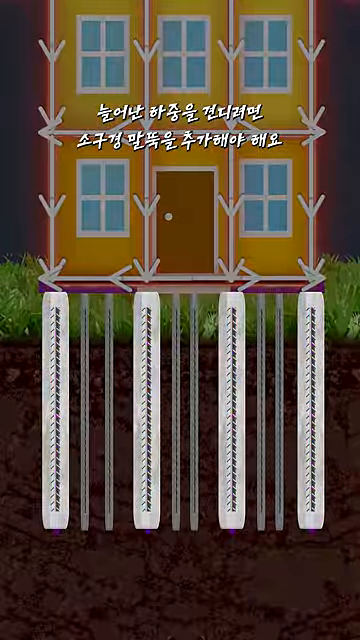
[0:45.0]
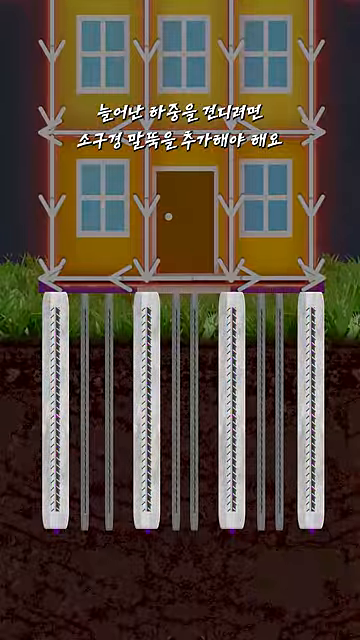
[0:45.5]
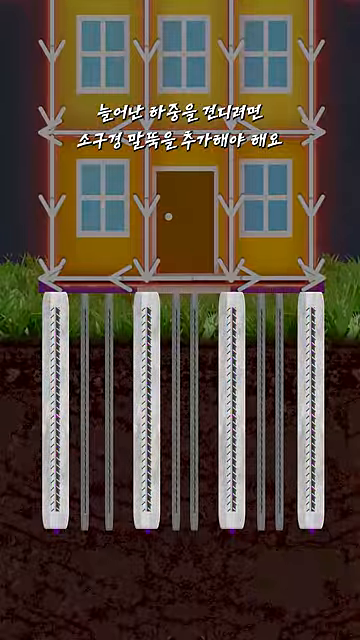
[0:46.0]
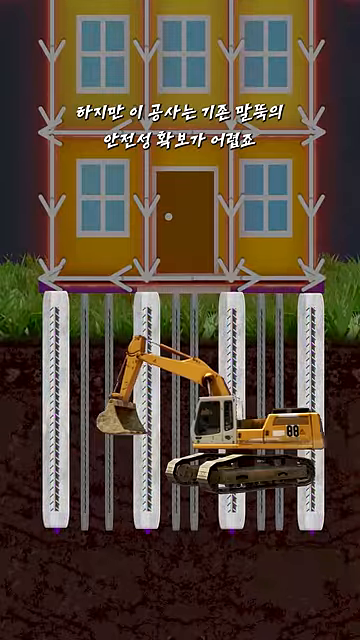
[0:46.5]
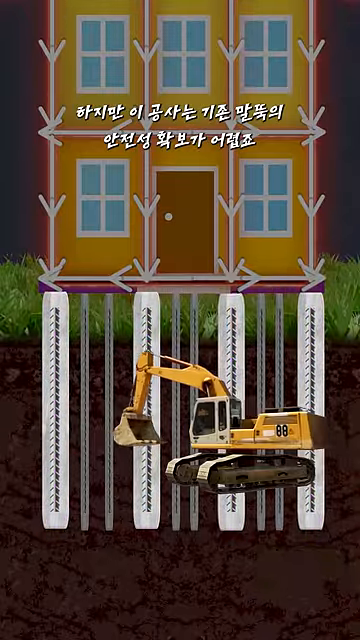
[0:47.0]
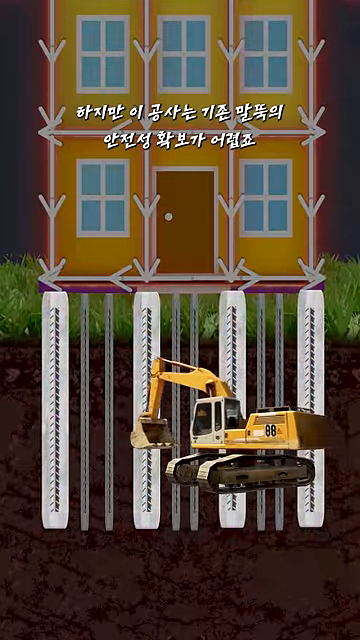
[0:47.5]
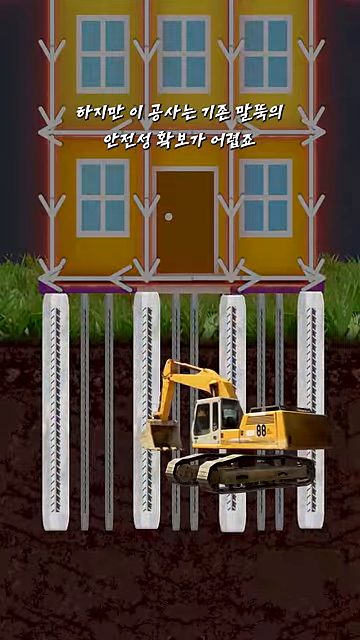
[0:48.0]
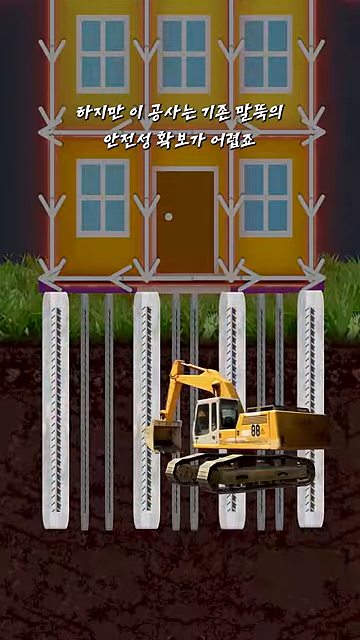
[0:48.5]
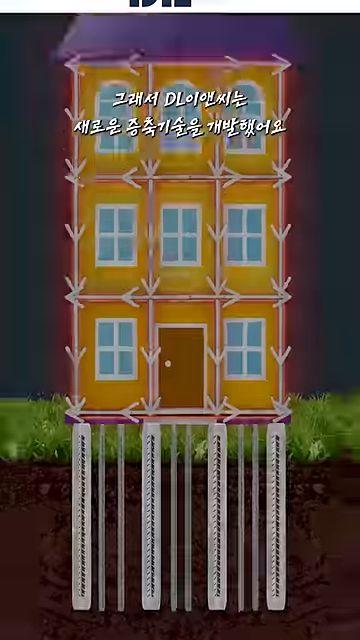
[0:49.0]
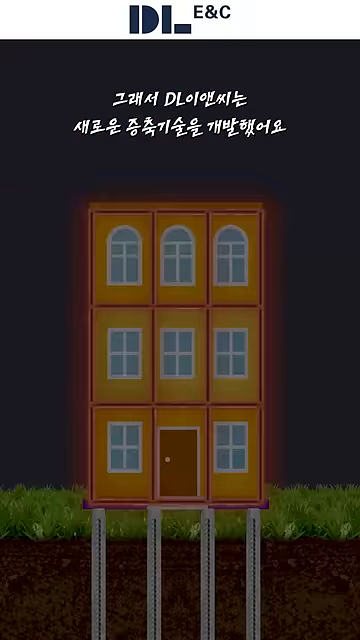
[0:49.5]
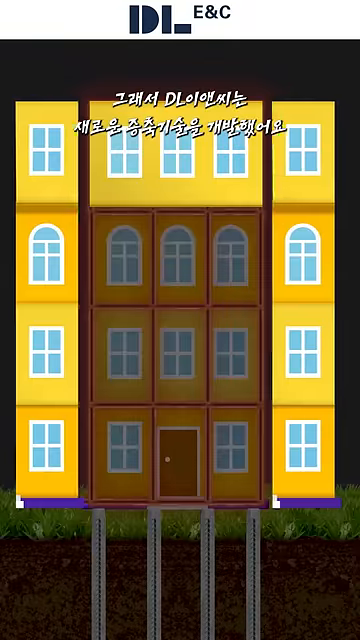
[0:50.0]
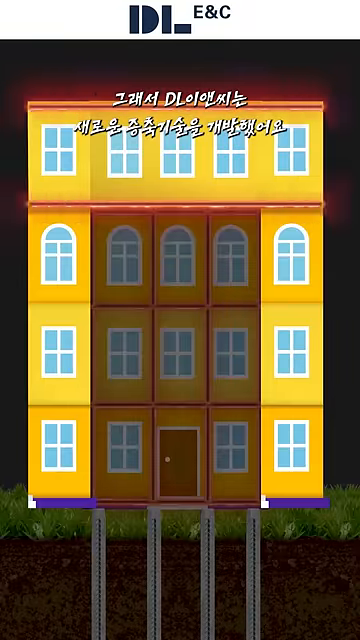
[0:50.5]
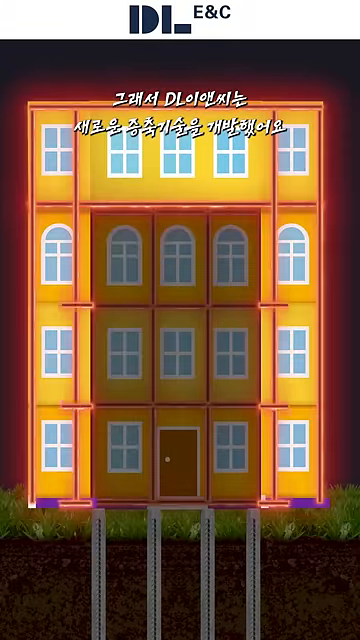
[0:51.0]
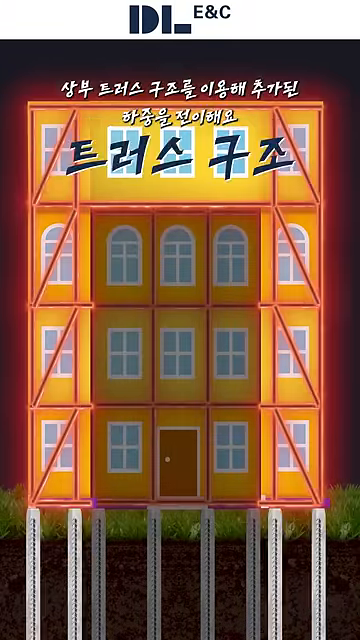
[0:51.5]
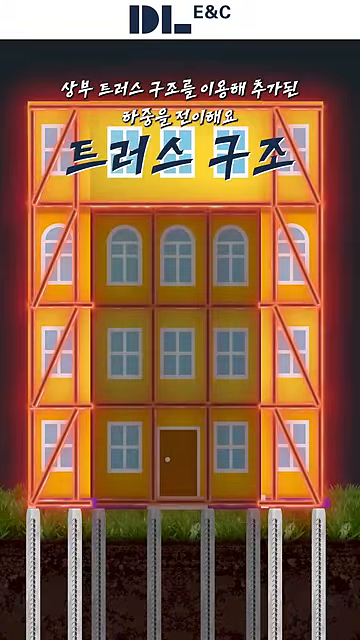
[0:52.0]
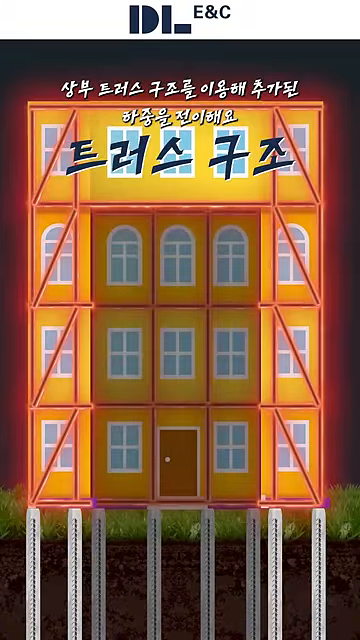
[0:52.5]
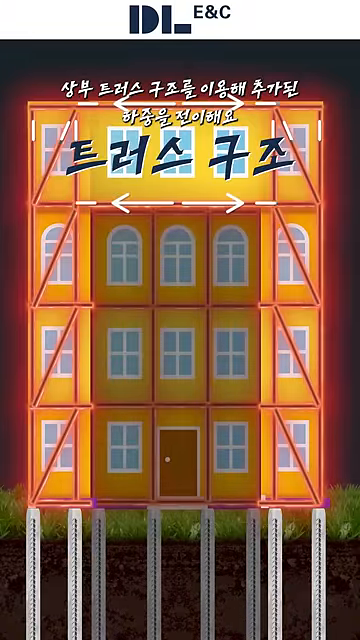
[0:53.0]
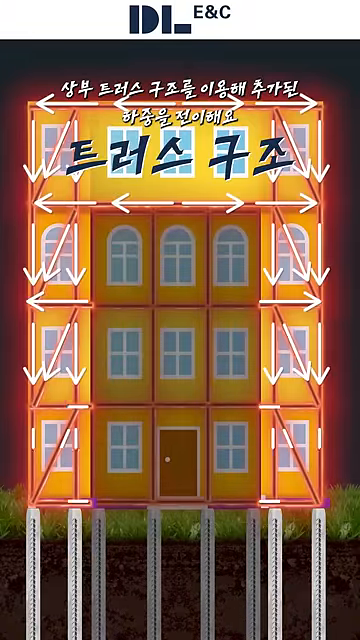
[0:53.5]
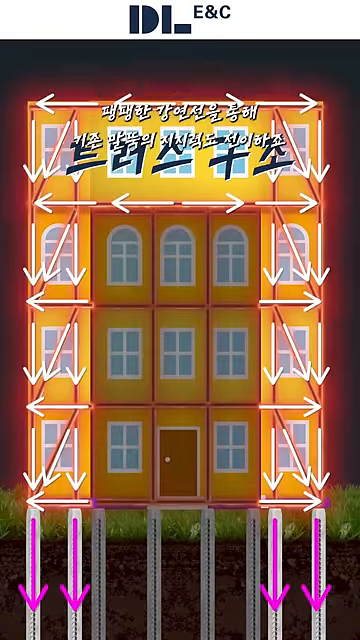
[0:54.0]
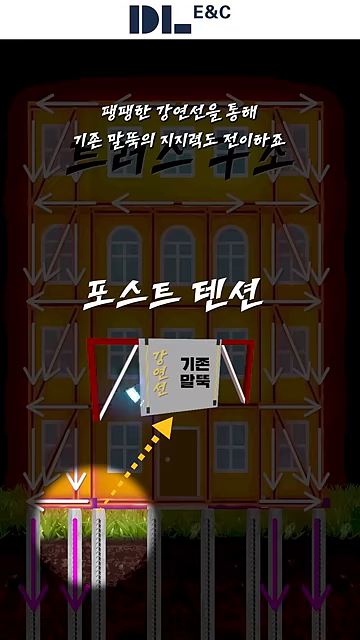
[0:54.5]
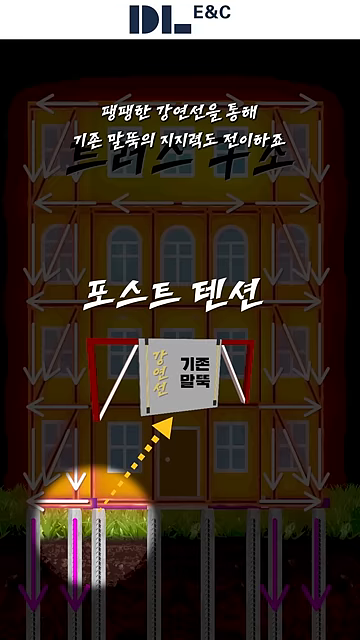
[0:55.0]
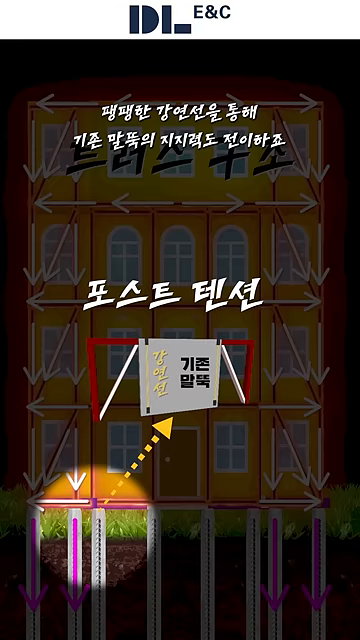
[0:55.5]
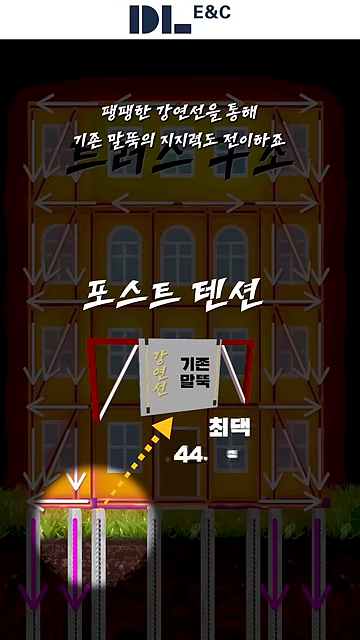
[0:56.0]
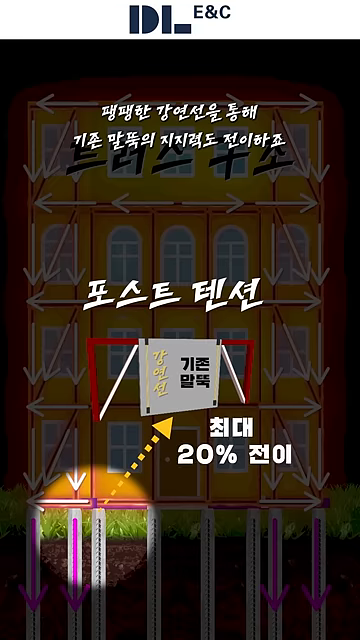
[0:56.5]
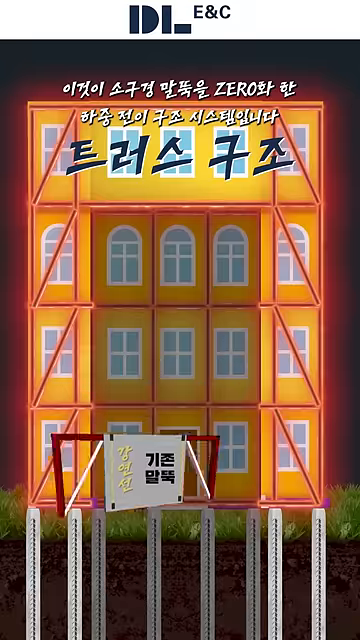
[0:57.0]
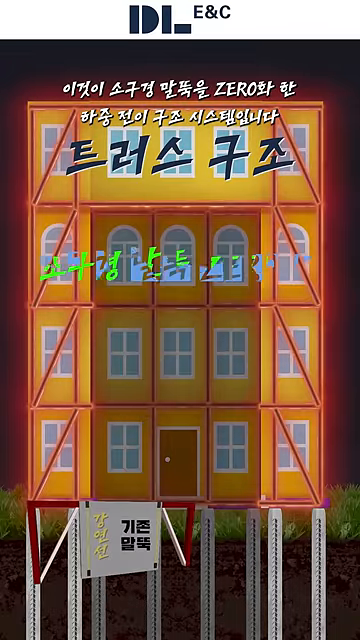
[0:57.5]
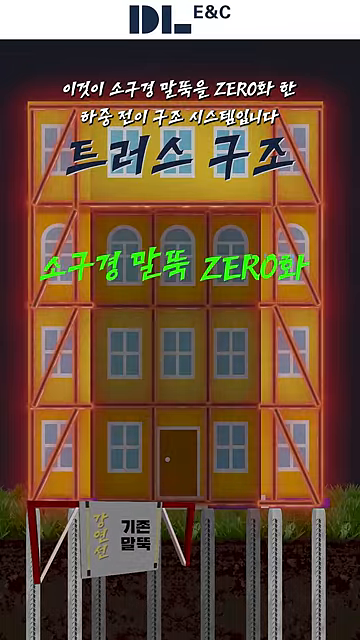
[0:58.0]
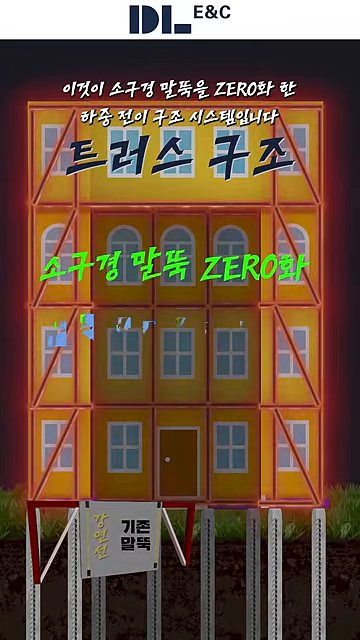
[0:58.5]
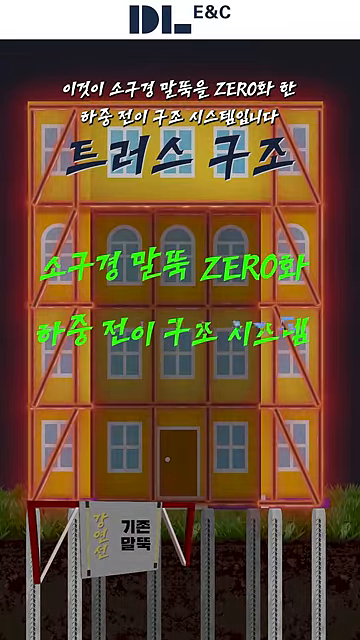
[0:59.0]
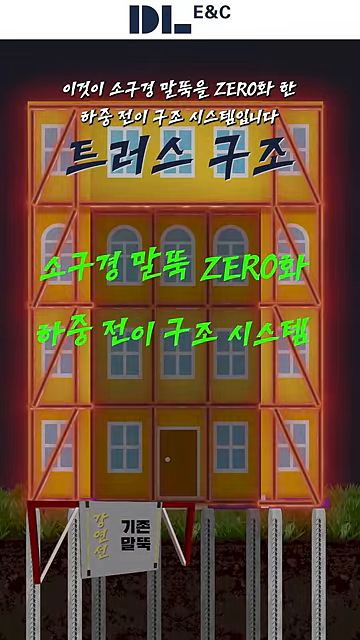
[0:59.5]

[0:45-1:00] An excavator appears underneath the ground, working on the support pillars as additional reinforcements are added. The building gains width and height as new floors are added and existing floors expanded. New arrows light up to indicate the pressure now being exerted, showing how additional bars are placed to reinforce the added load and how the pressure acts on the pillars. The view zooms into a small section, showing in more depth how the pressure is distributed and what measures keep the structure stable, while green text floats across the screen marking the pressure points and showing how the load must be evenly balanced.